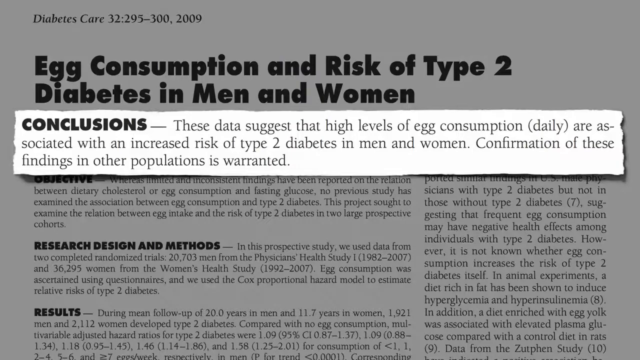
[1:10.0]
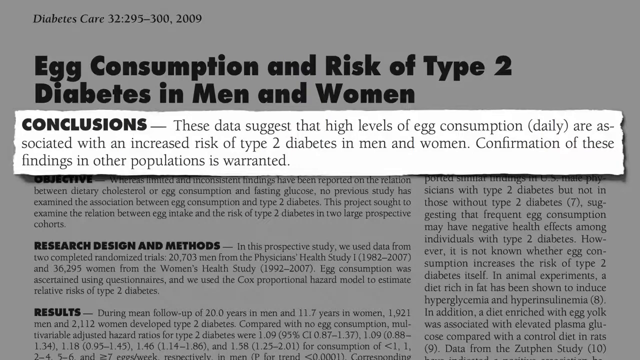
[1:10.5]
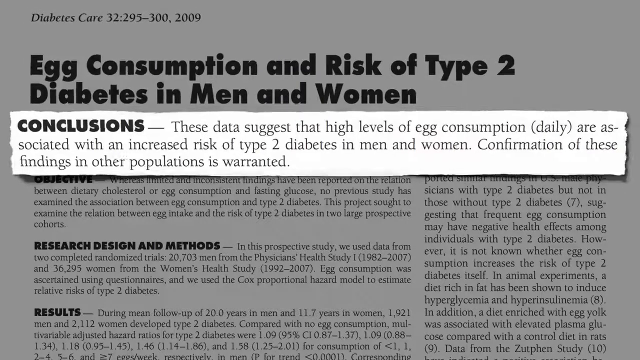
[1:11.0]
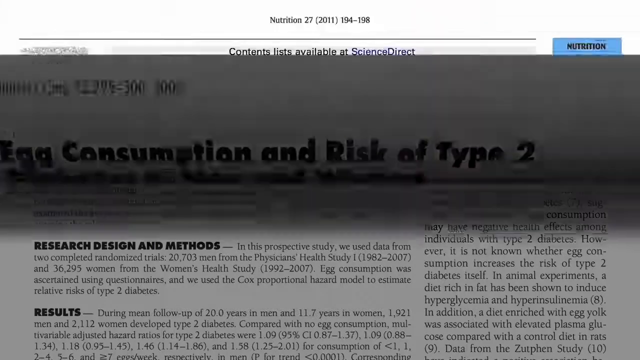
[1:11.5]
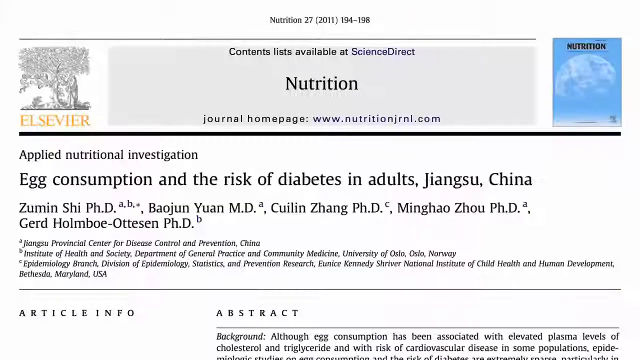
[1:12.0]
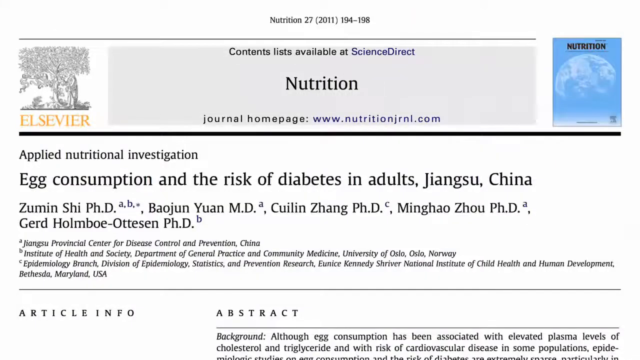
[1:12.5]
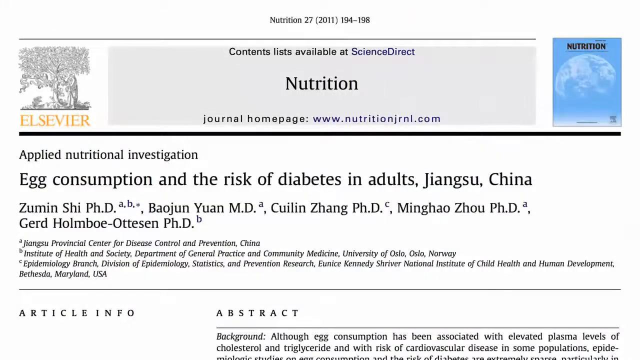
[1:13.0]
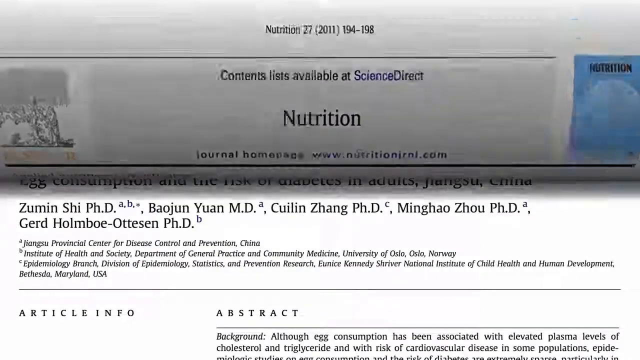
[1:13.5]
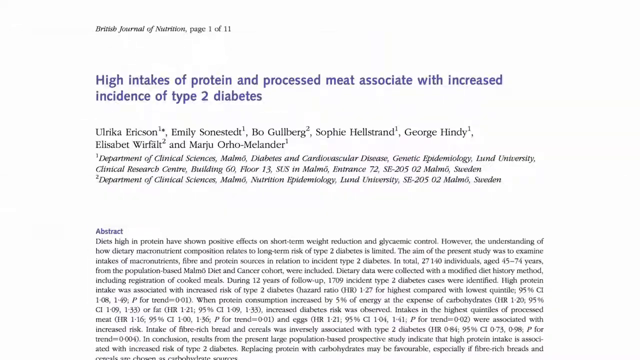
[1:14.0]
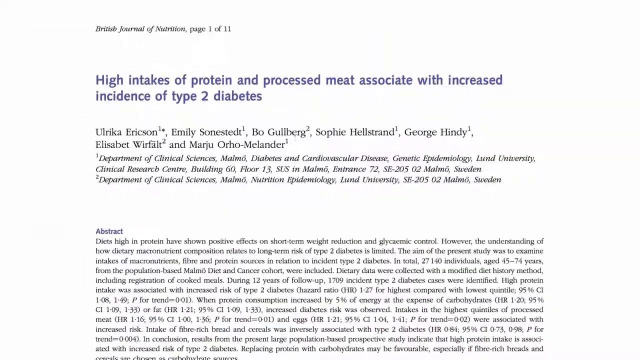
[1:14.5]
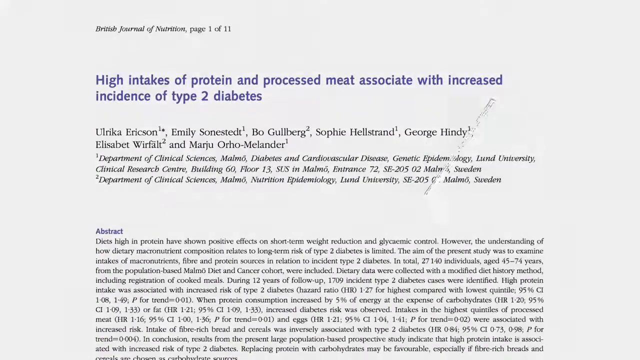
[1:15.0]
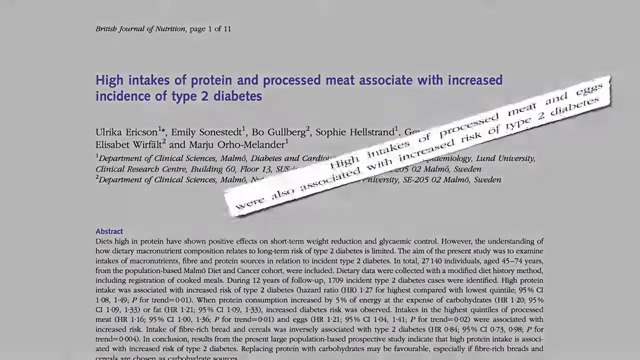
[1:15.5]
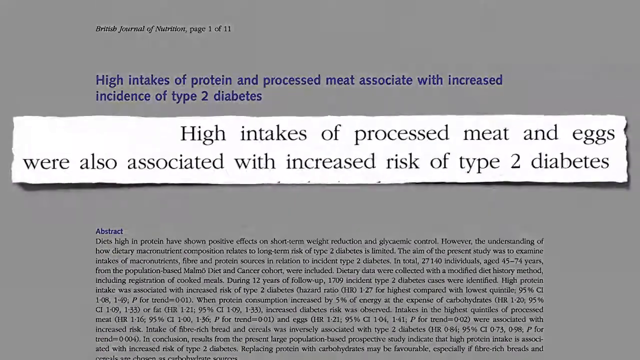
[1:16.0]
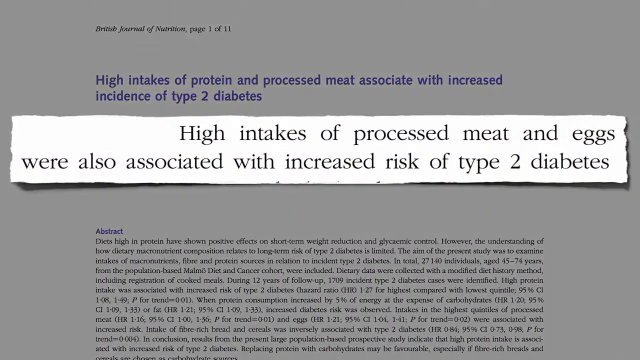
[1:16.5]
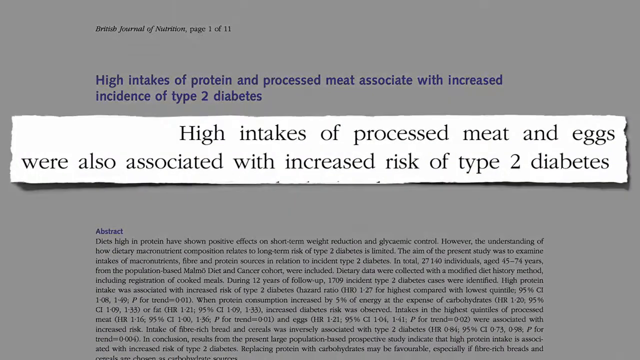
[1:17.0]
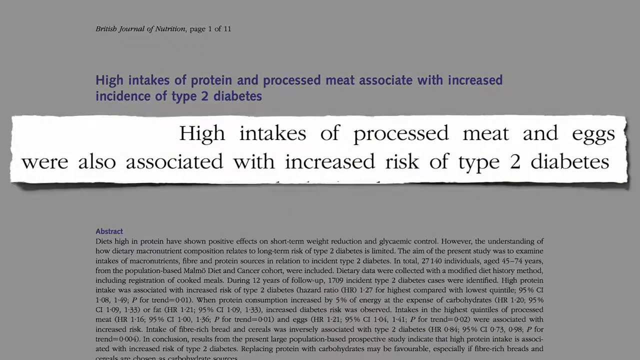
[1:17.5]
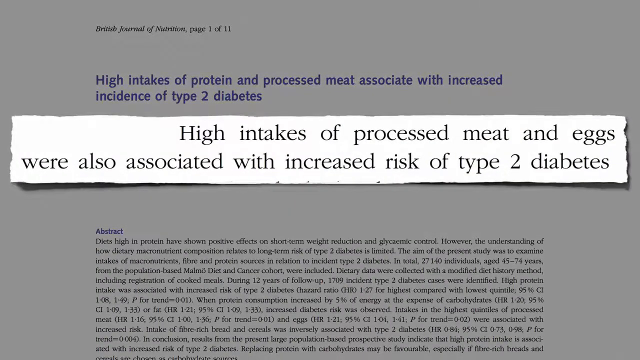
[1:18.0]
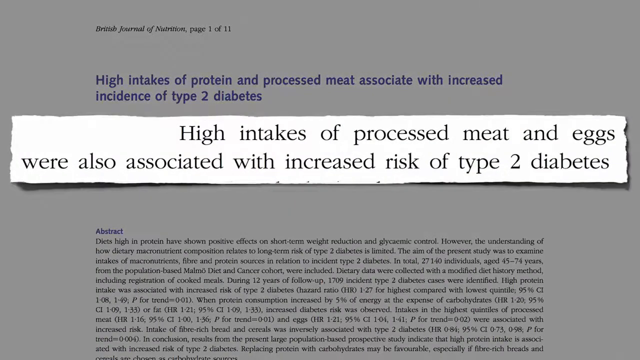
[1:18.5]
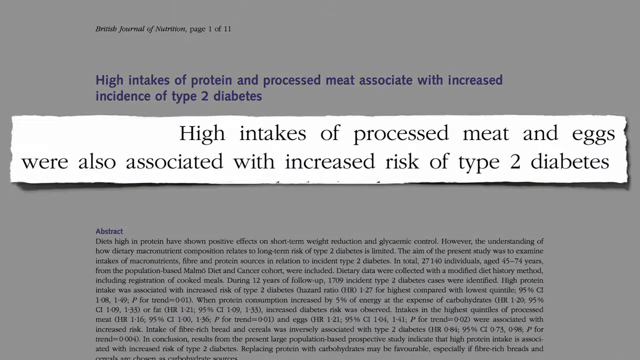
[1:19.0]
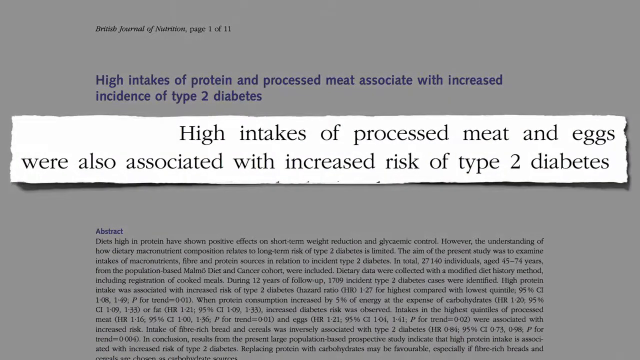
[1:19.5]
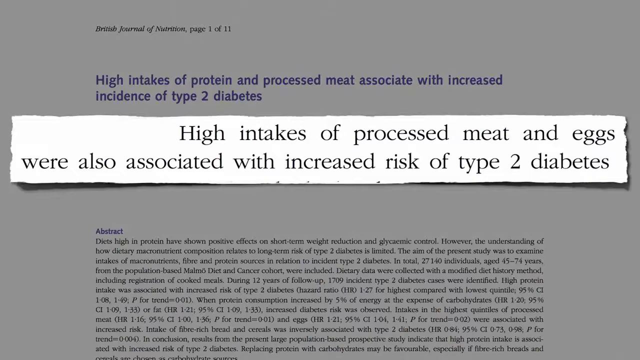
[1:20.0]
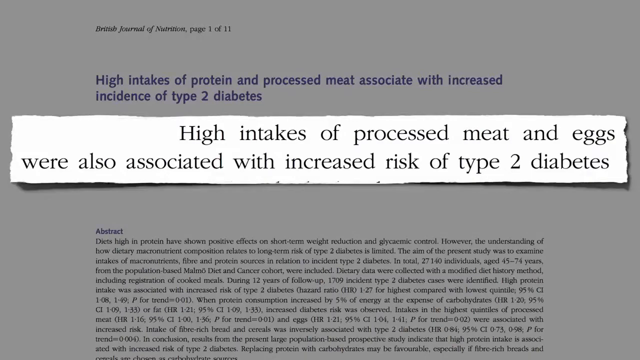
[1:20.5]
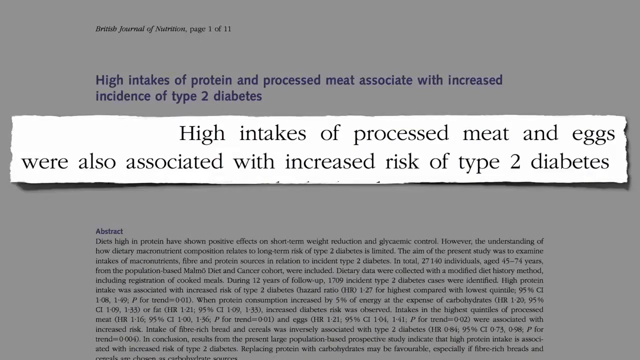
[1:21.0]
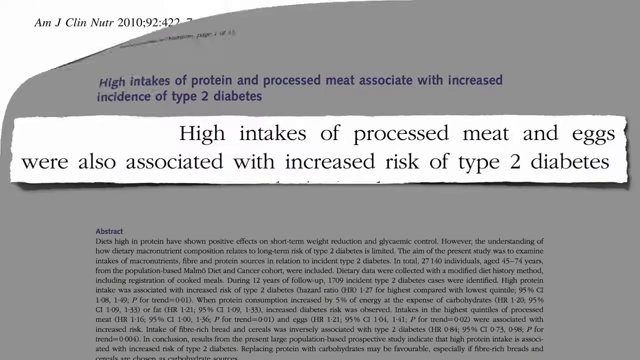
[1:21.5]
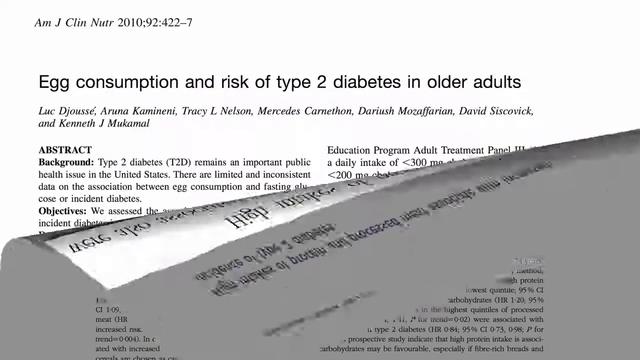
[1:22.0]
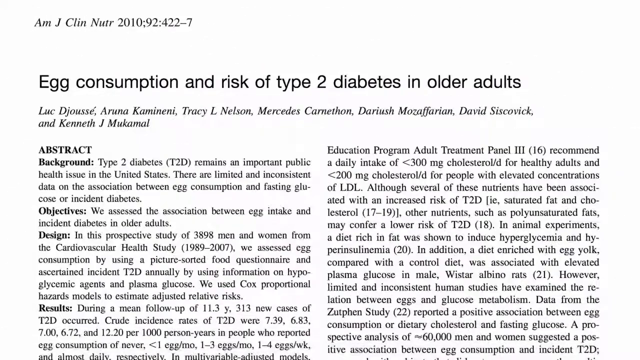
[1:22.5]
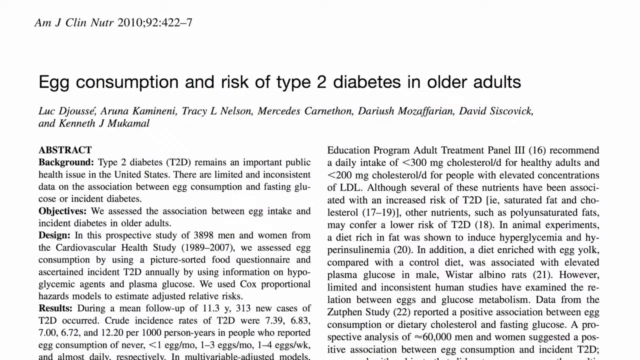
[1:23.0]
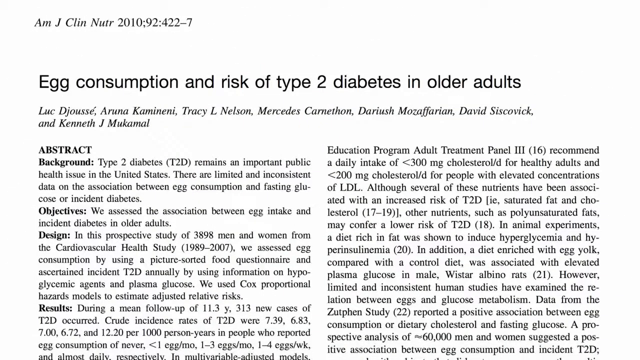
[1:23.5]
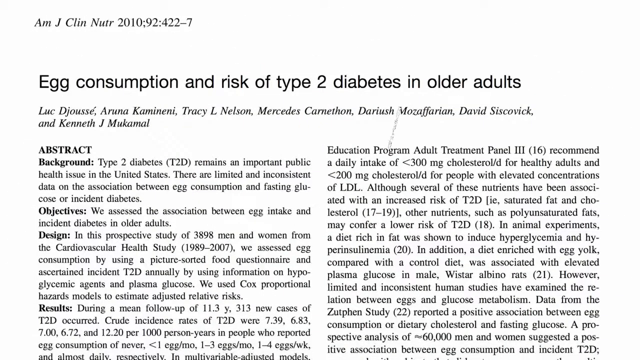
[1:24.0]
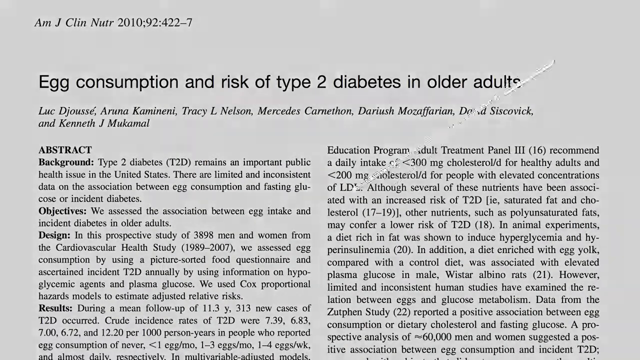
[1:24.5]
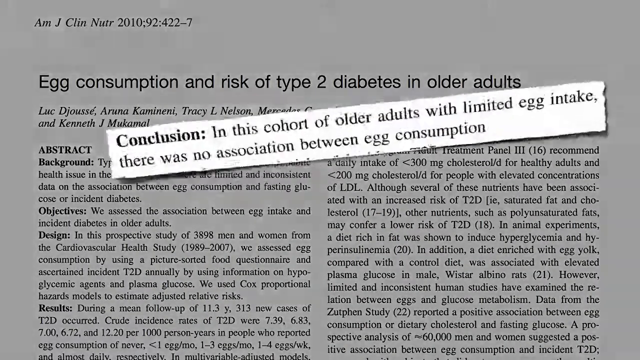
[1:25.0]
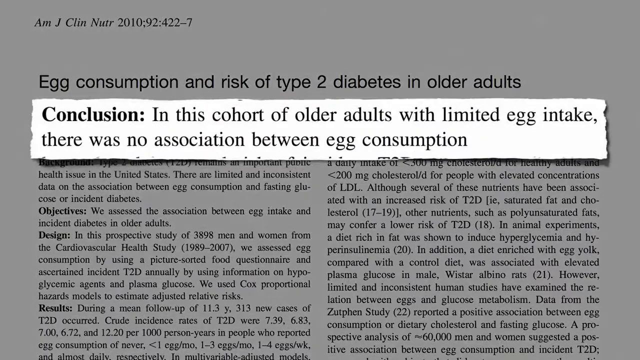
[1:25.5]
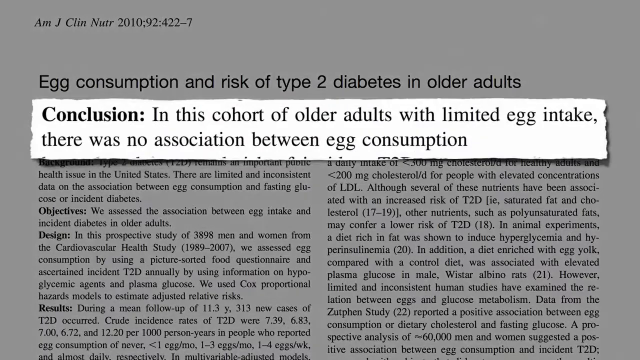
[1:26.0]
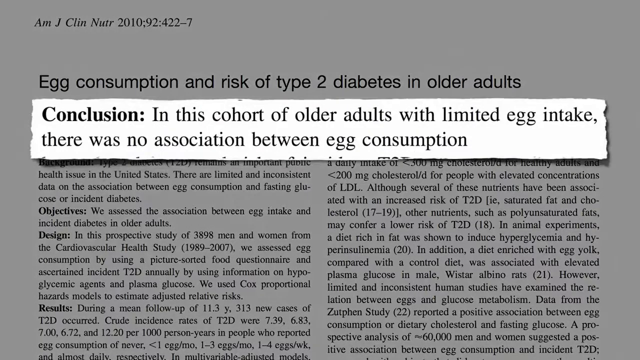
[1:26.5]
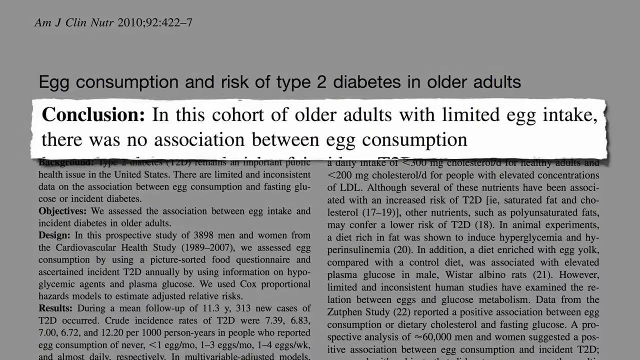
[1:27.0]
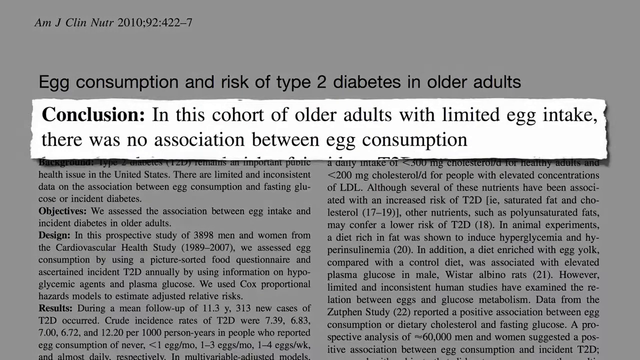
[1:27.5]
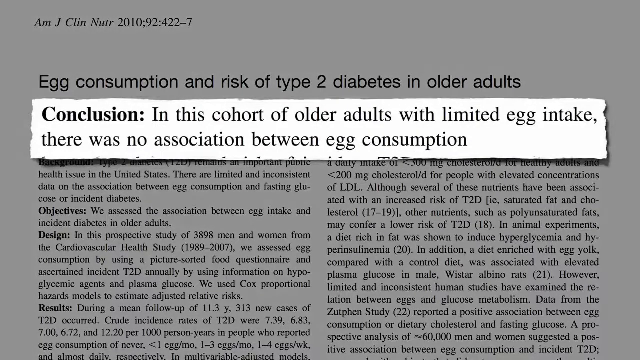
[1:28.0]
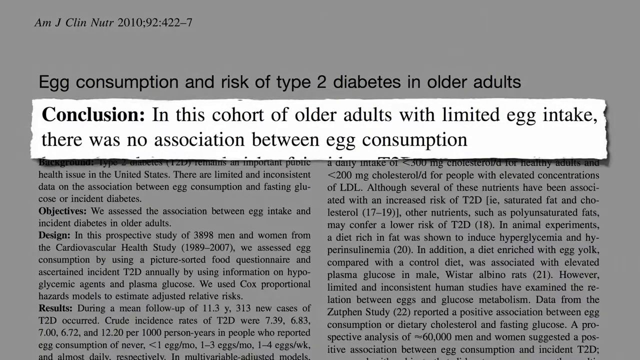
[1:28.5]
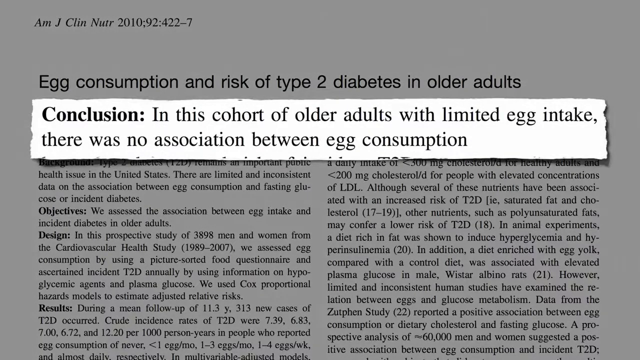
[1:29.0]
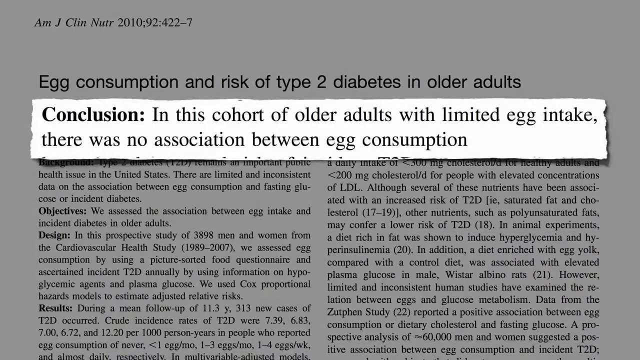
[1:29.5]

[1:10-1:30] Another article appears, titled at the top "high intakes of protein and processed meat associate with increased incidence of type 2 diabetes." A small section of the article is enlarged and presented in front, reading "high intakes of processed meat and eggs were also associated with increased risk of type 2 diabetes." The top left corner and the background show that it was taken from the British Journal of Nutrition. The scene changes to another article titled at the top "Egg Consumption and Risk of Type 2 Diabetes in Older Adults." A section of it is enlarged, reading "Conclusion. In this cohort of older adults with limited egg intake, there was no association between egg consumption."